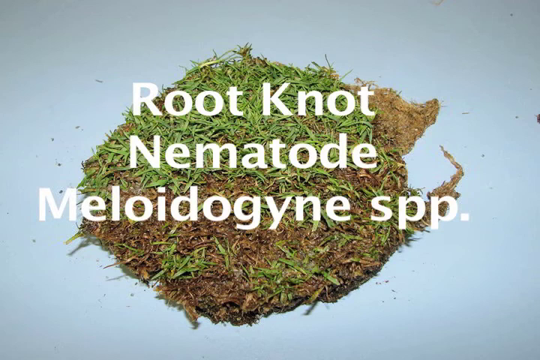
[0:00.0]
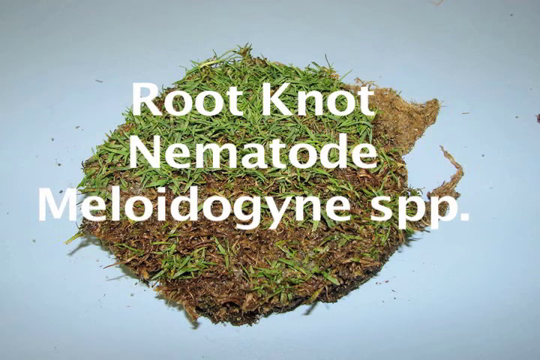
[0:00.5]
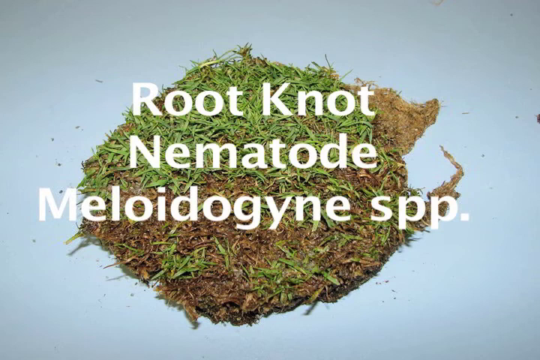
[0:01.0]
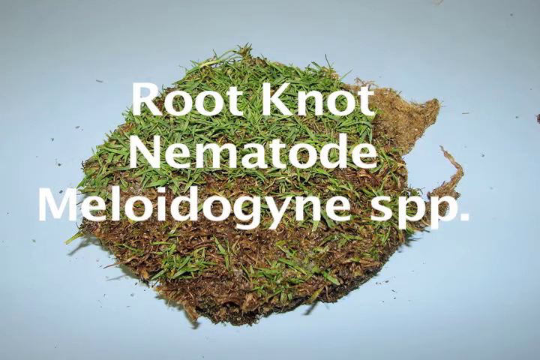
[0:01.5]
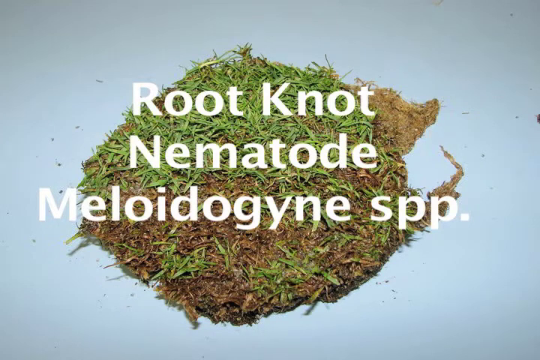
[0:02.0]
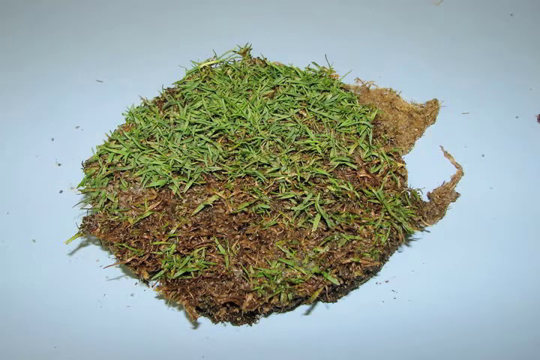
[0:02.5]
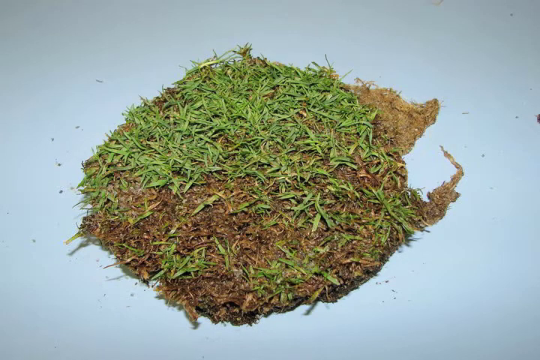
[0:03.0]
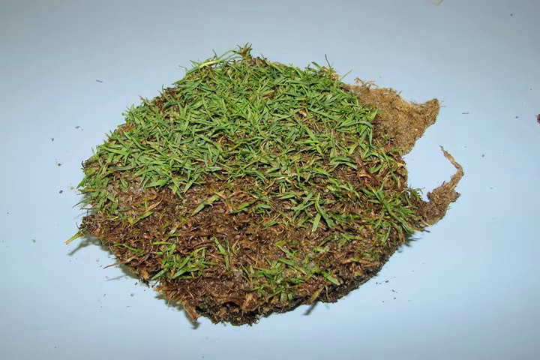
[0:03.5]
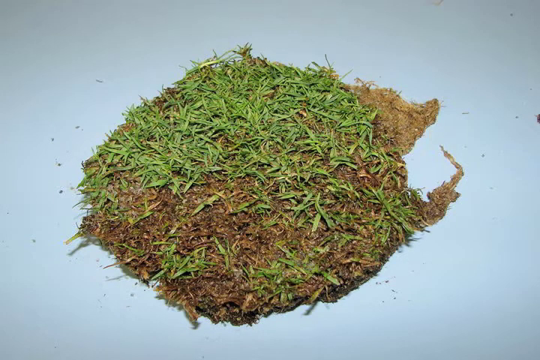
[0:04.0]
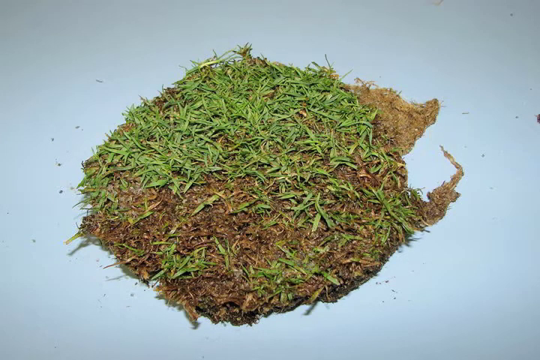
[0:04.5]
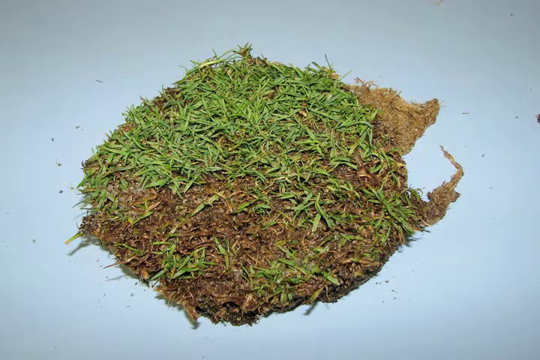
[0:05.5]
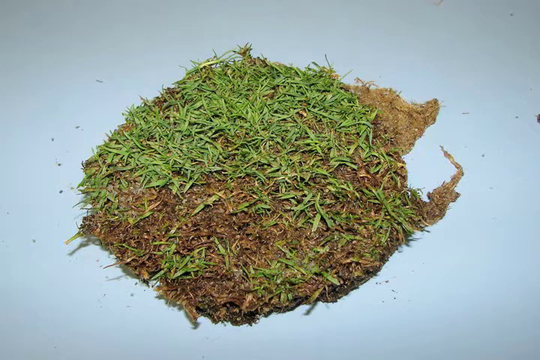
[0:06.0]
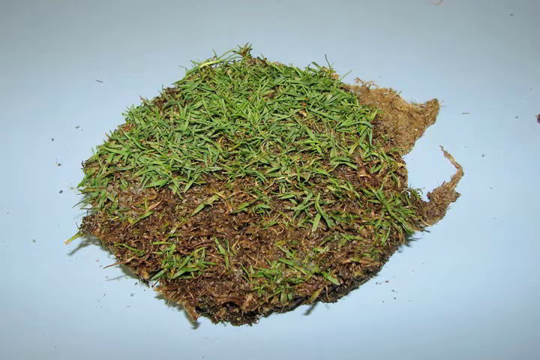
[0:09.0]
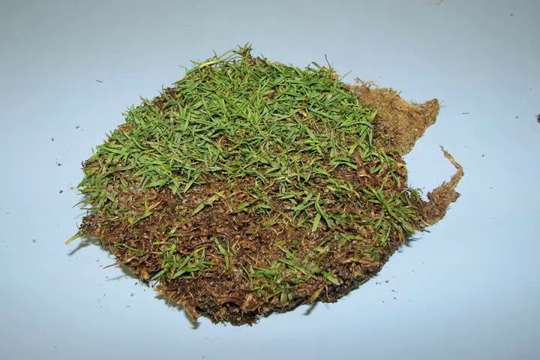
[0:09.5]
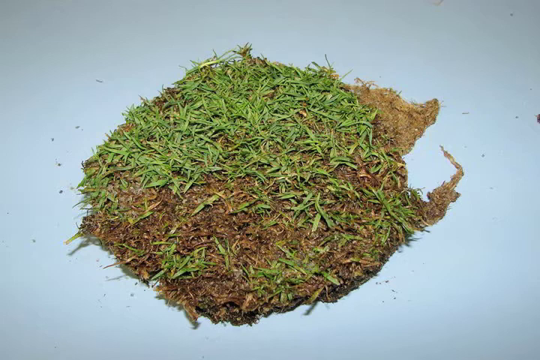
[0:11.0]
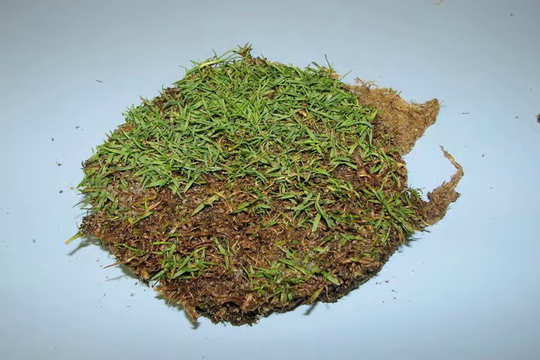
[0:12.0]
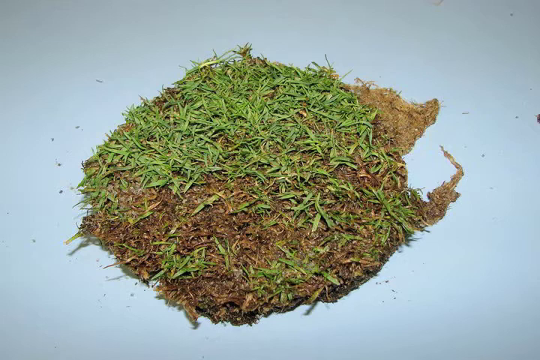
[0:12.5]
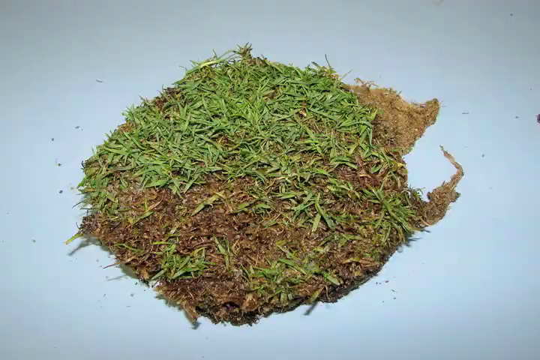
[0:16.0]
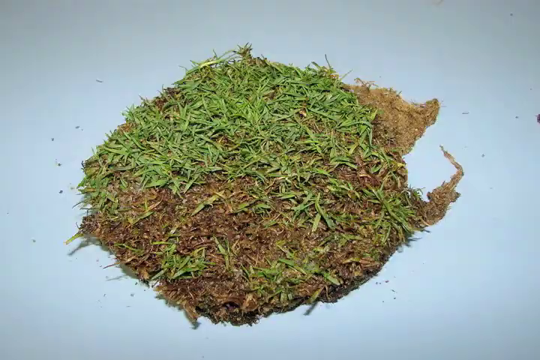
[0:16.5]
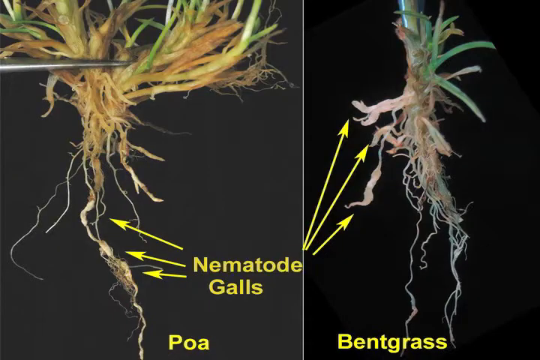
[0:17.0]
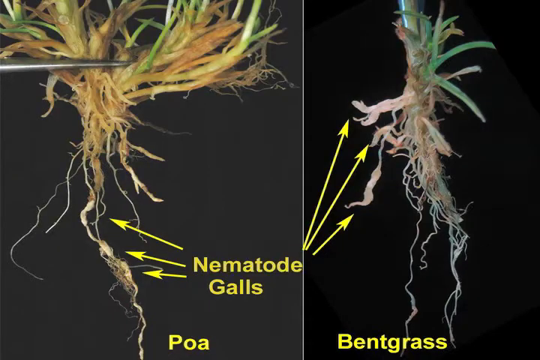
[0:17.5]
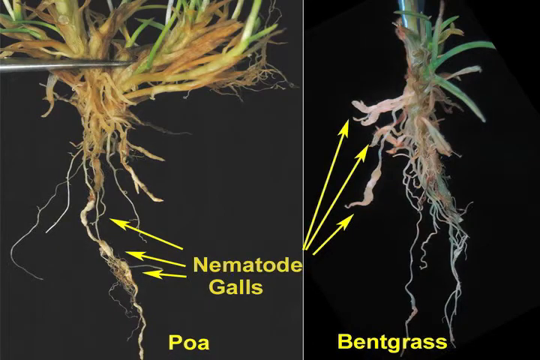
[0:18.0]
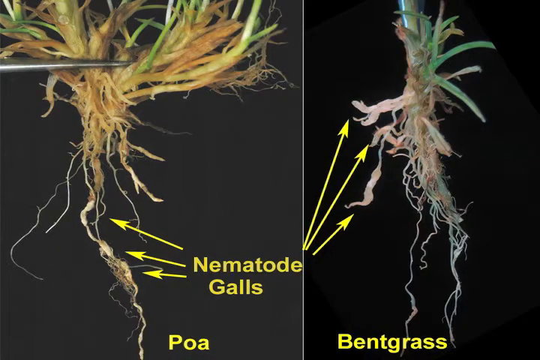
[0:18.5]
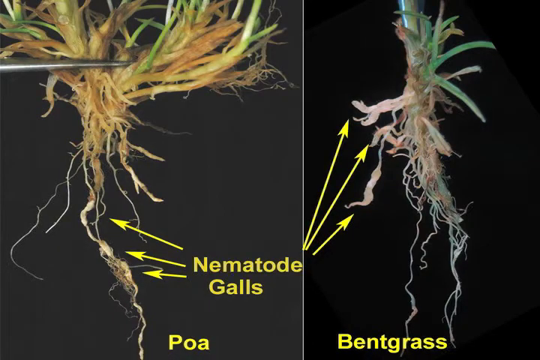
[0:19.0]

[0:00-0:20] A piece of grass that has been removed is set on top of a white table. The surrounding part of the dirt patch looks to be dry and has some roots coming out of it. The top of the patch has darker brown soil with grass growing on top. At the top, white text reads "Root Knot Nematode Meloidogyne SPP", and the text then fades away from the top of the dirt patch. A picture is shown briefly with two images side by side; the left image is a bit bigger. Both images show the roots of a plant, and the roots and the grass attached to them are being held with a large metal tweezer. In the bottom left of the screen, yellow text reads "nematode galls". On either side, three yellow arrows point to the outer parts of the thick roots.